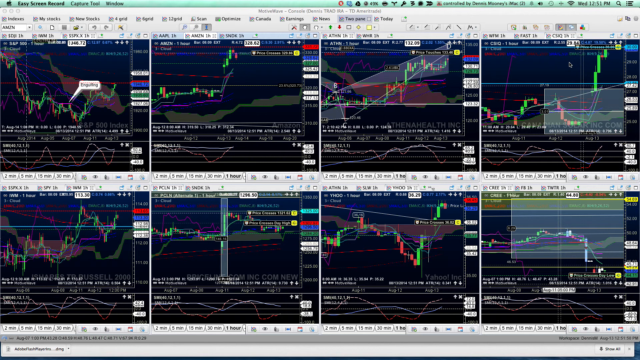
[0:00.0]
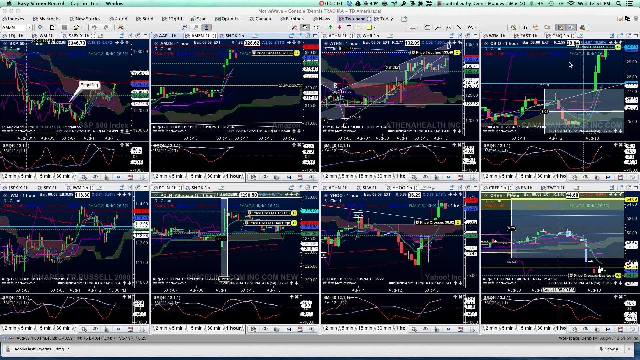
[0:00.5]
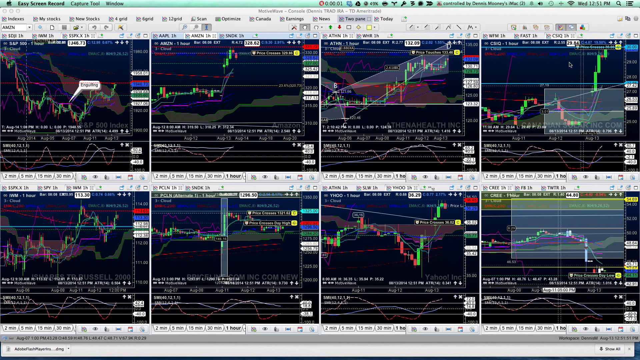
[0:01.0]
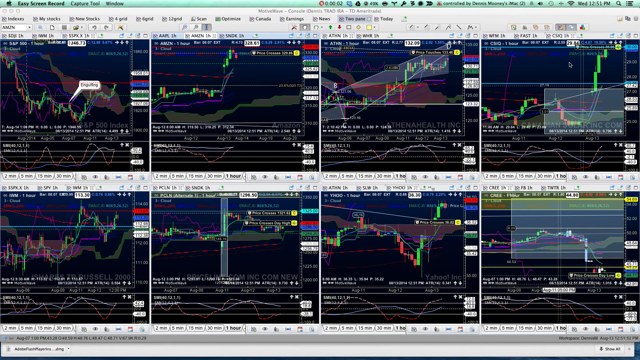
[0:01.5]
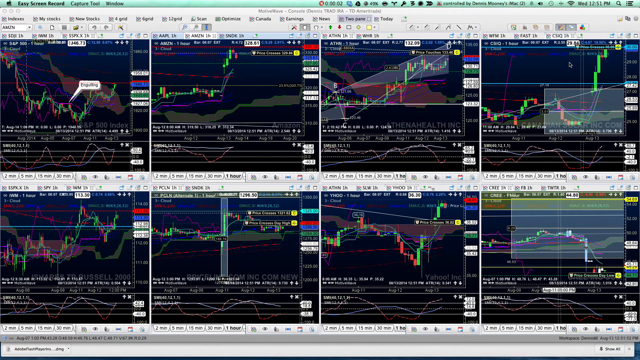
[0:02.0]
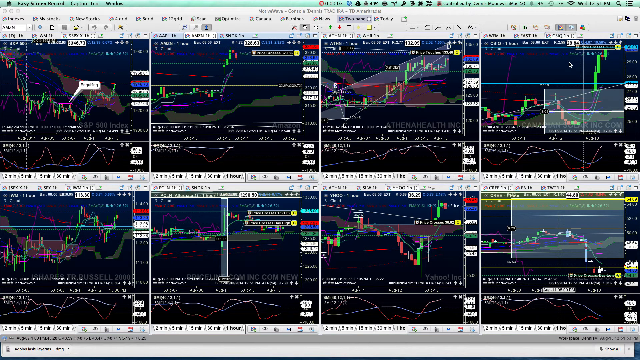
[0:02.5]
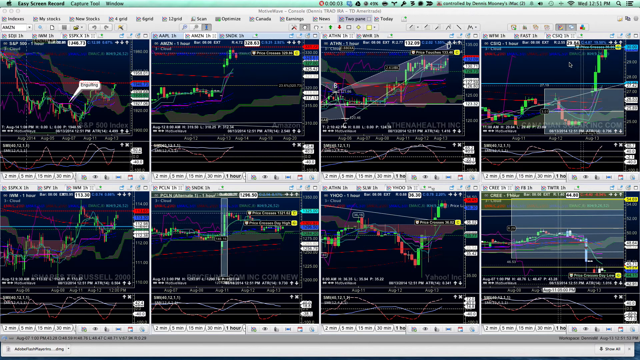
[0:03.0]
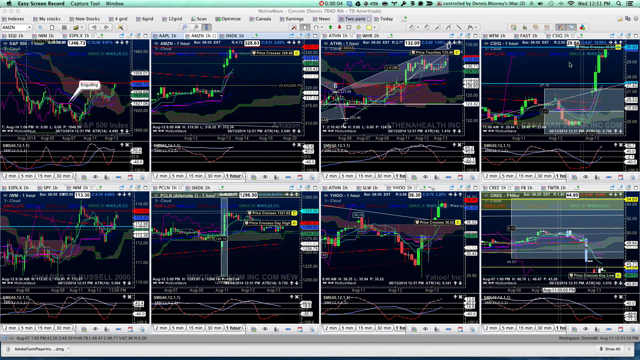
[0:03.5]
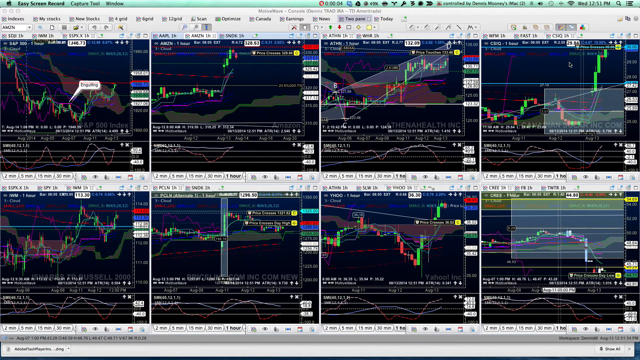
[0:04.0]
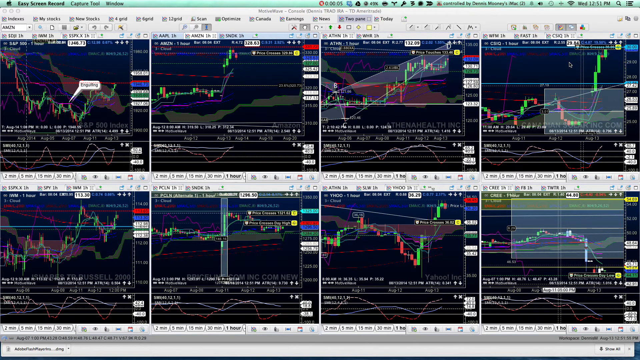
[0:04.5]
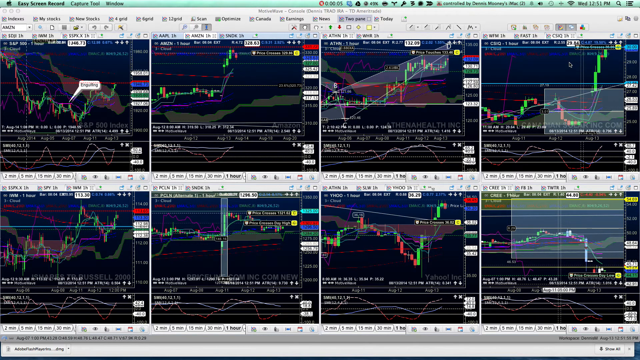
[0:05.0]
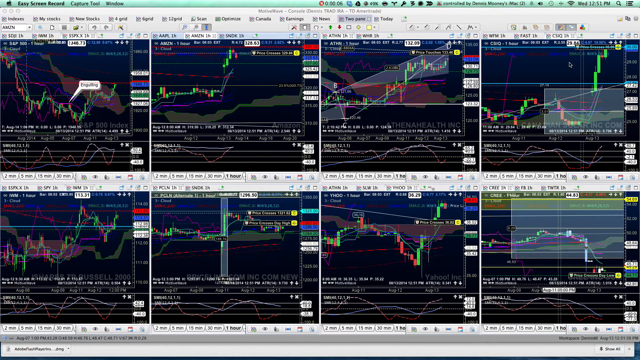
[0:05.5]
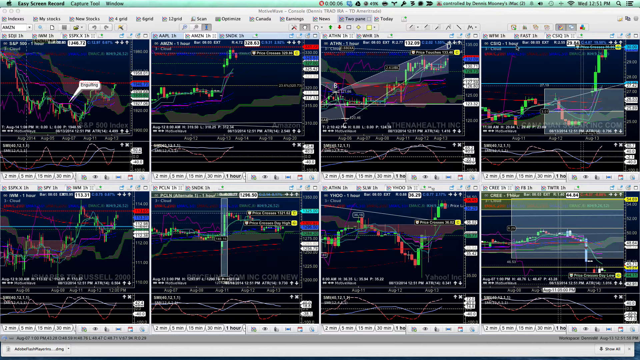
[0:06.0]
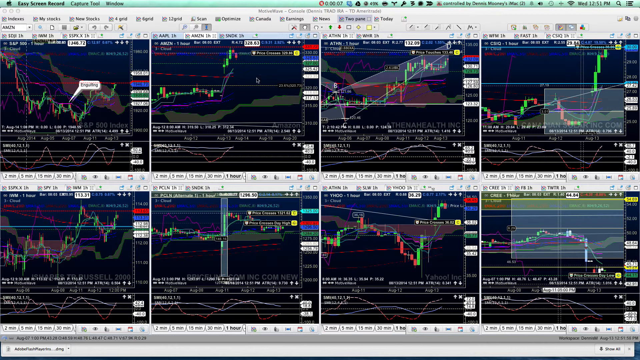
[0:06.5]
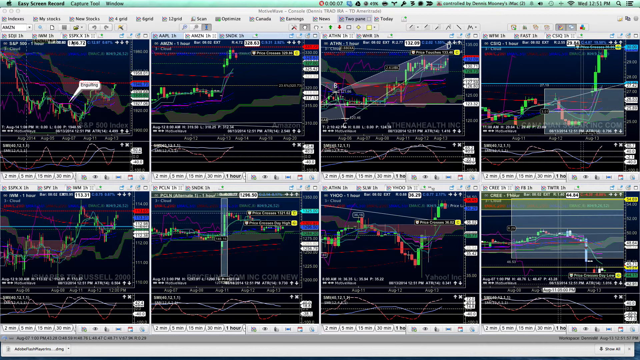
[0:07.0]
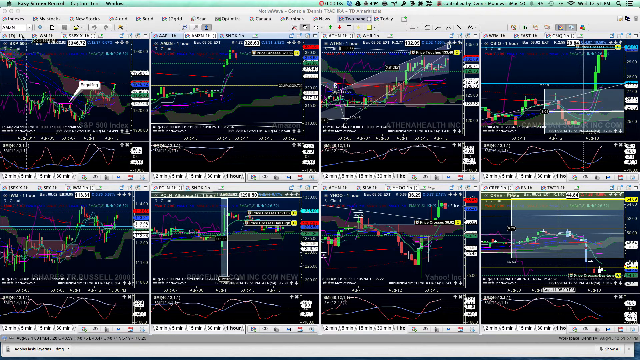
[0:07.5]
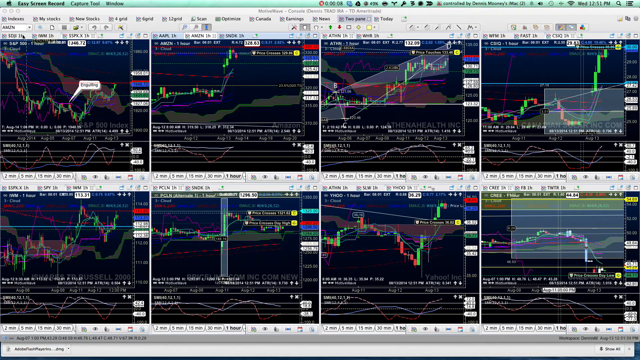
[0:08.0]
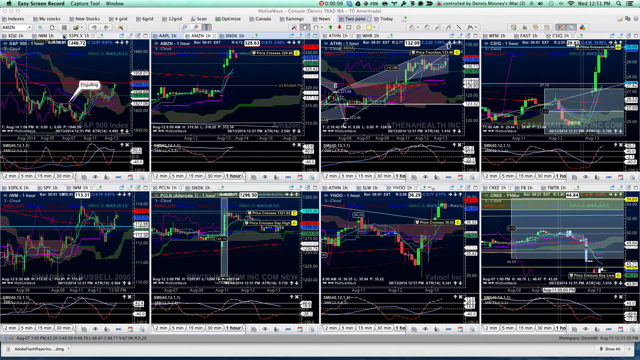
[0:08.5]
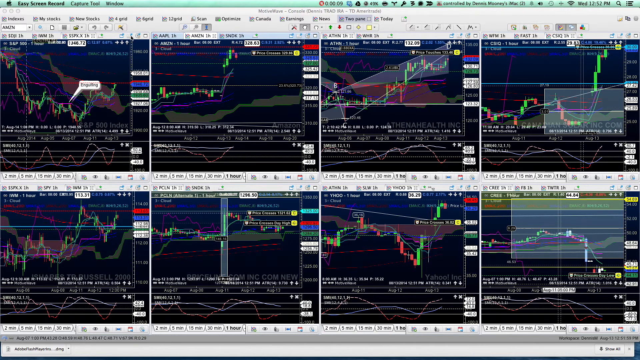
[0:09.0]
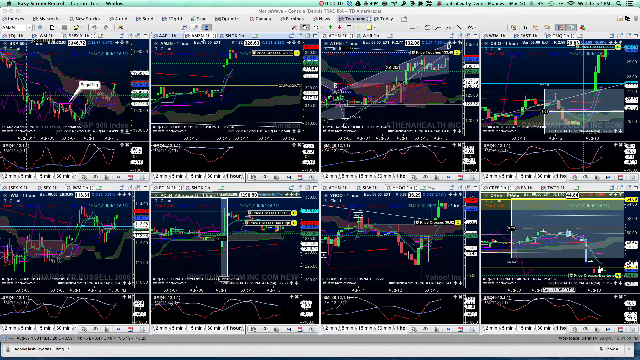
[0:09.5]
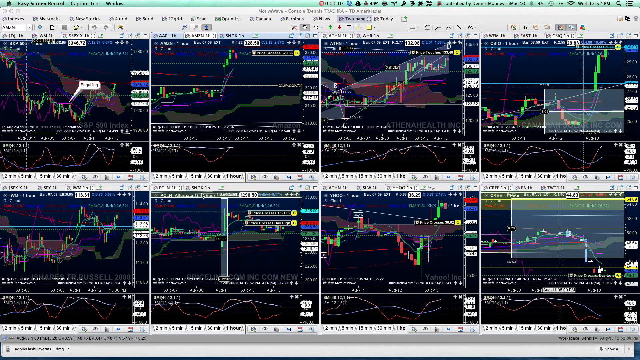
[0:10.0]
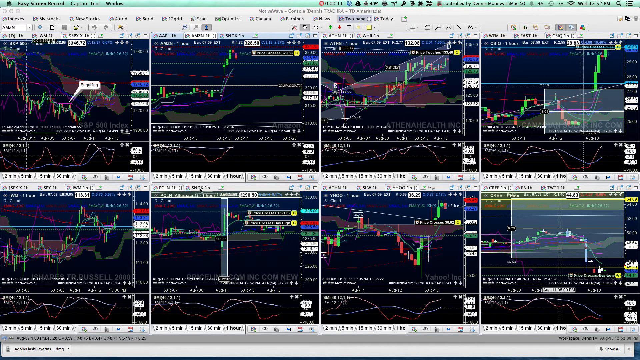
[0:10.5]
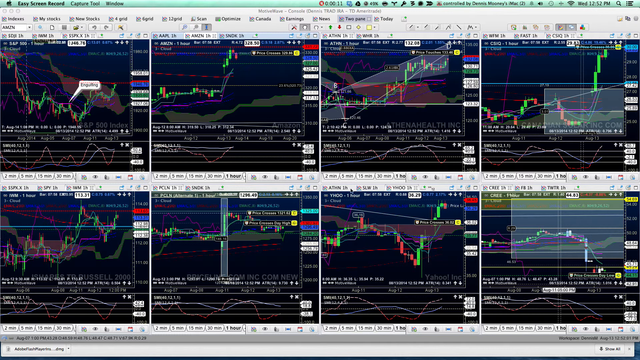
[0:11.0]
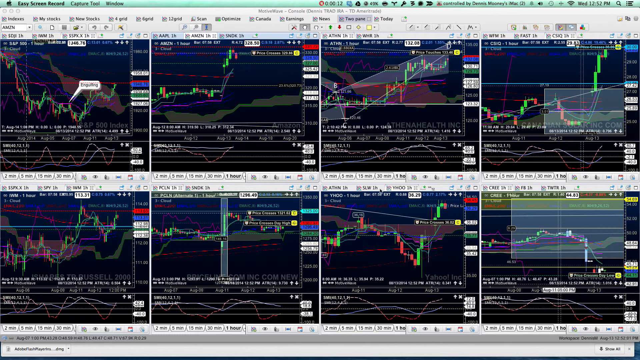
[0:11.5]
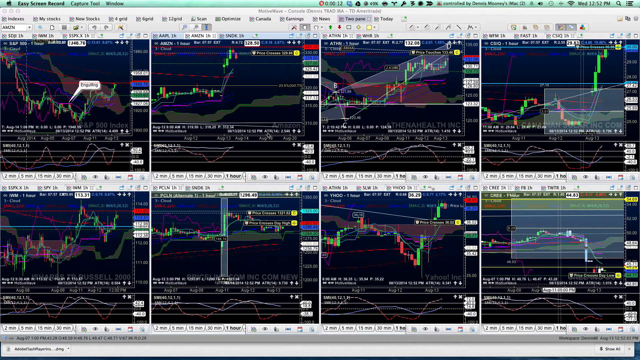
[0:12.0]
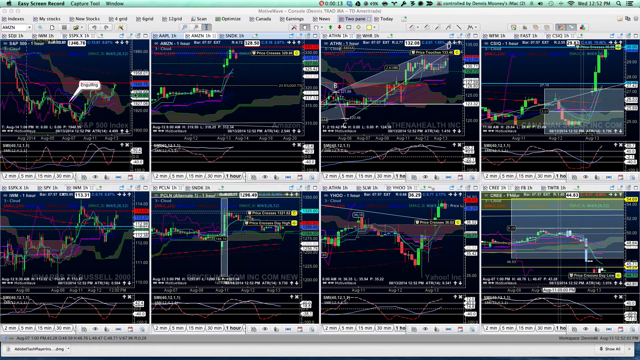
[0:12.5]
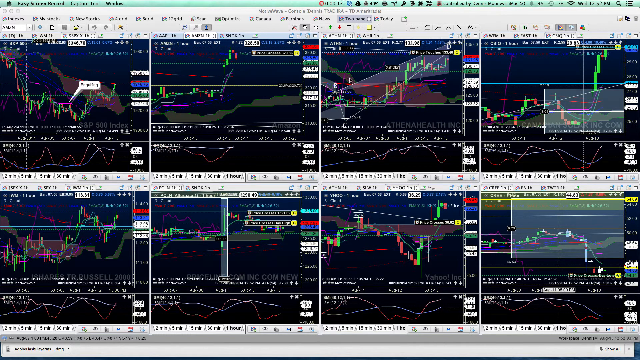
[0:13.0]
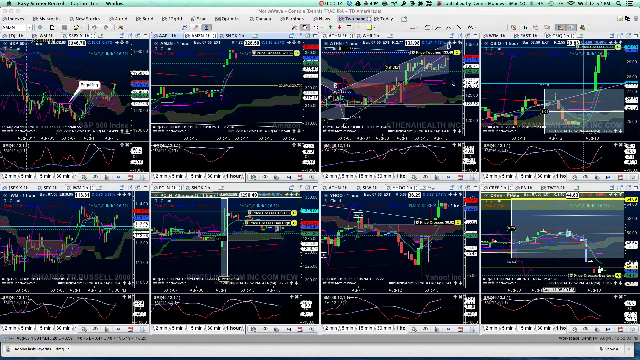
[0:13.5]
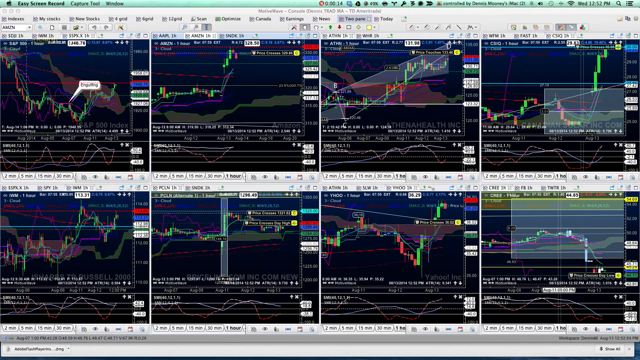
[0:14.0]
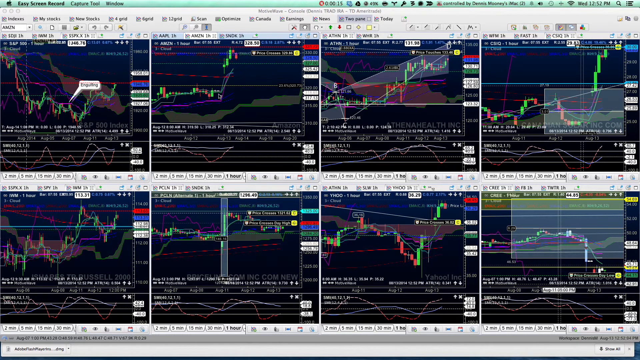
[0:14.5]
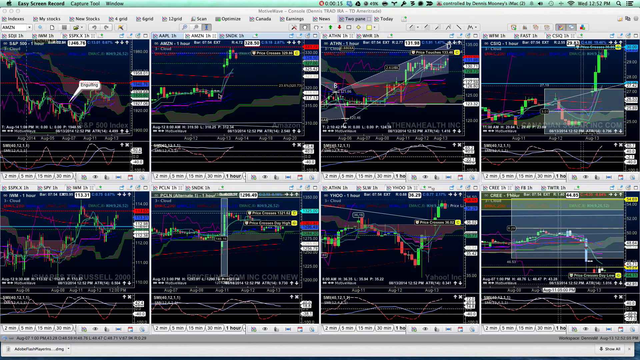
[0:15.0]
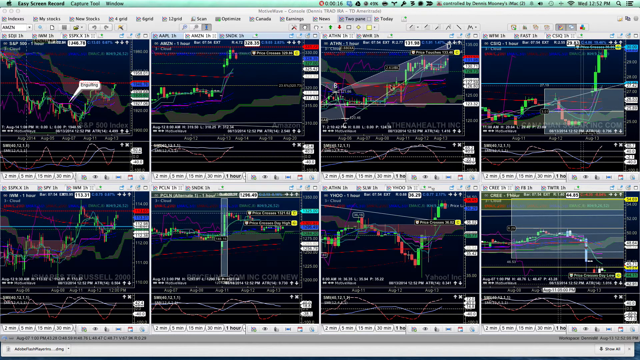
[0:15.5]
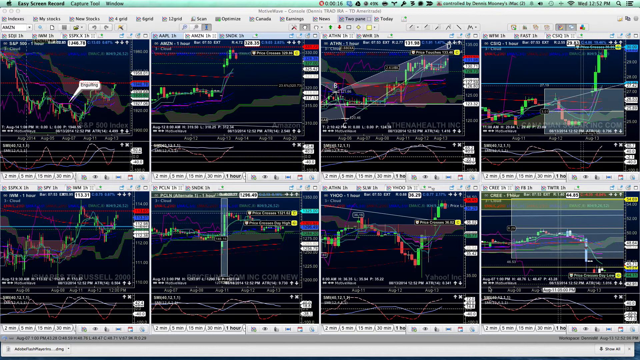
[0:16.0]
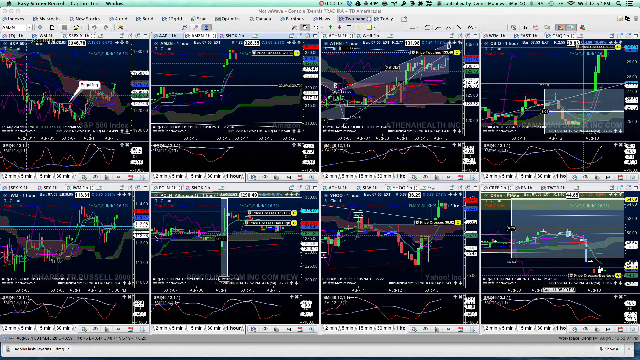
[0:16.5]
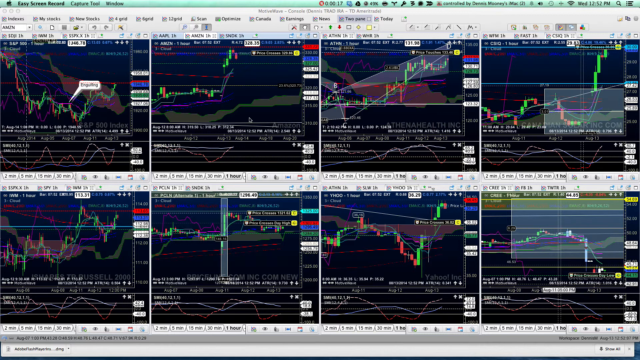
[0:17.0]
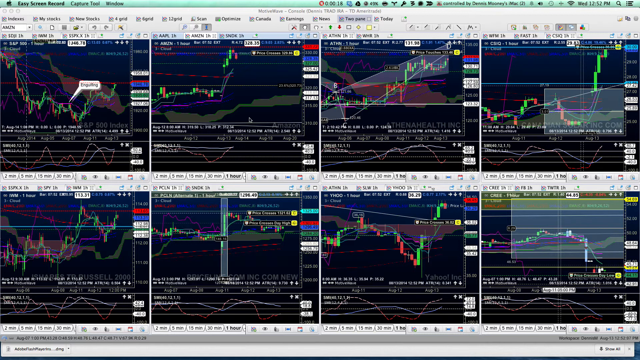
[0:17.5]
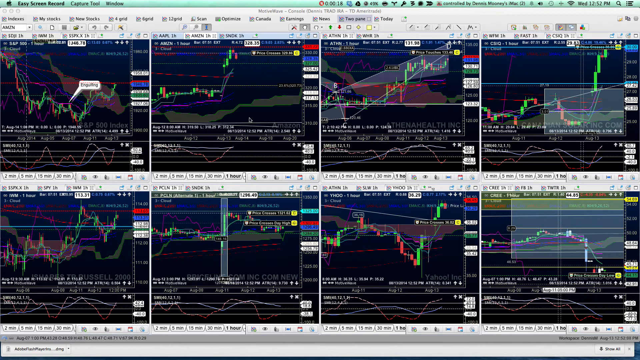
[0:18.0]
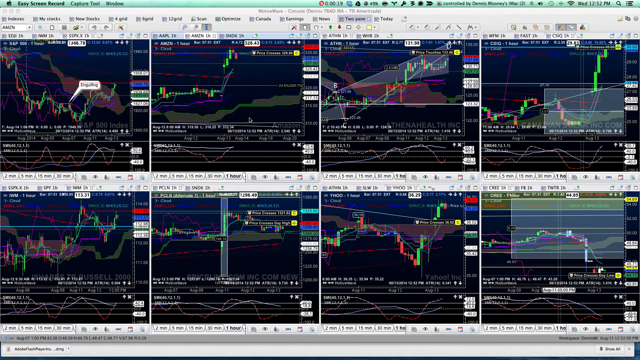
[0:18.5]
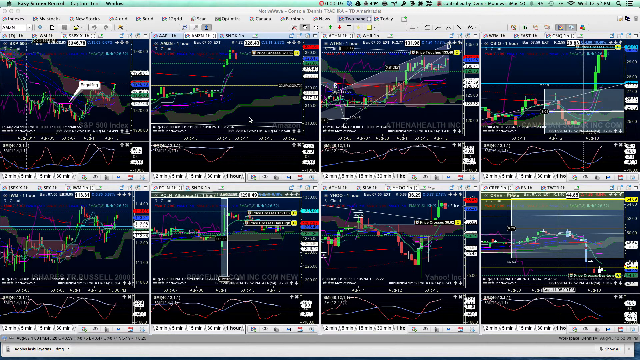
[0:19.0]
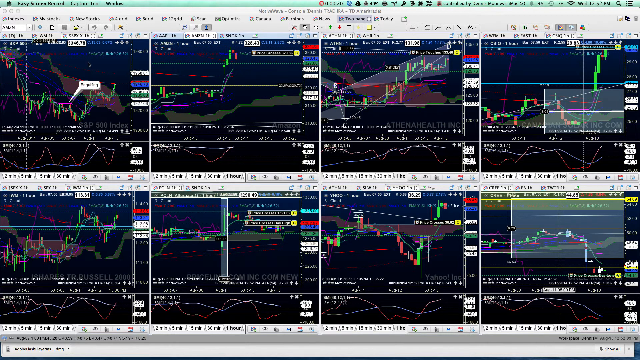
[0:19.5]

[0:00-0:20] Some sort of data charts are on screen, seemingly showing stock prices. The image is rather blurry, but there are eight charts, four in one row and four in the next. There appear to be stock name abbreviations on them; one seems to read Amazon, another seems to read AAPL, and CREE appears on the bottom right. They look like candle charts, with green where prices are increasing and red where they are decreasing. There also seem to be average lines over each chart, along with a number of other chart elements. The user scrolls over the titles of the charts, and also scrolls from left to right over the bars and lines. Each chart is different. The top left one goes down: it starts at a very high price and craters toward the bottom, spikes up a little with another green section, then falls even further than the first crash, and where the line stops at the end it is about halfway up from its initial price. In contrast, the second one seems to start a little below the middle, then at the end jumps up to about double its original height.